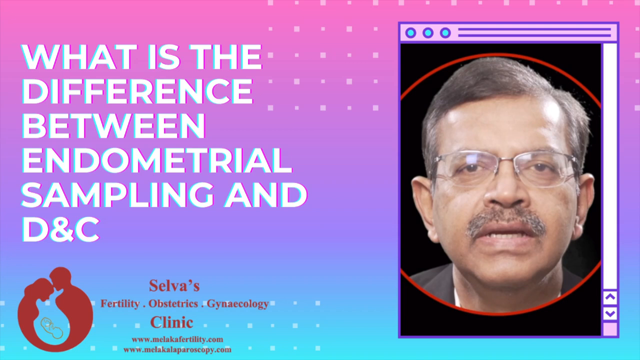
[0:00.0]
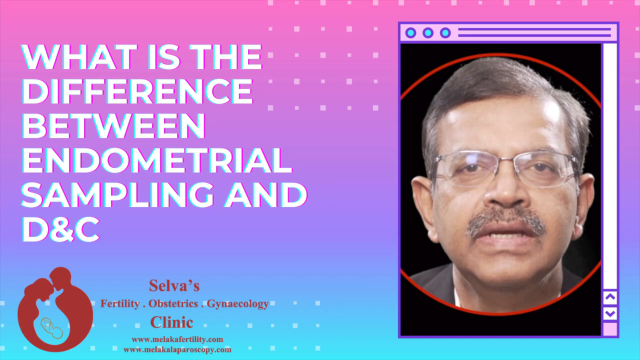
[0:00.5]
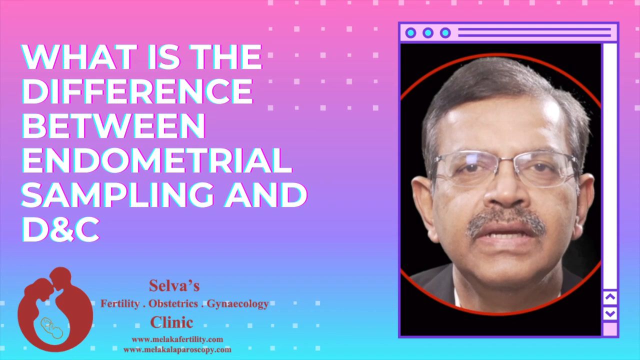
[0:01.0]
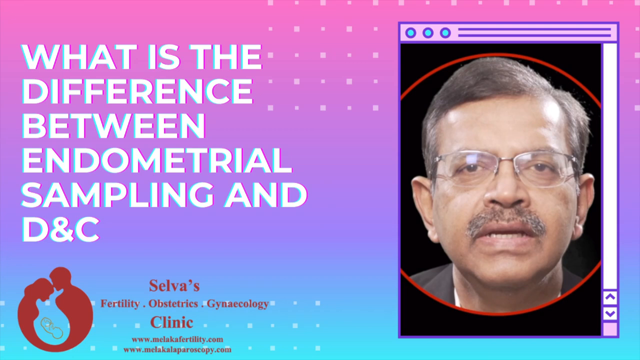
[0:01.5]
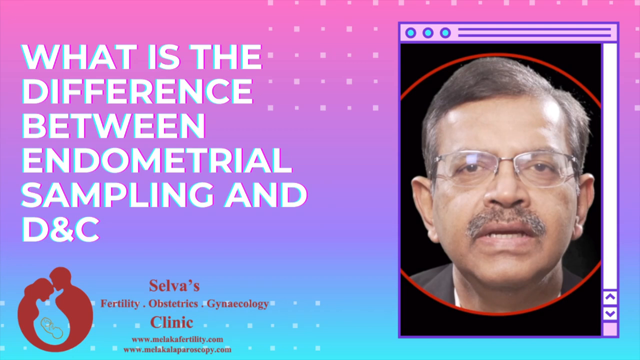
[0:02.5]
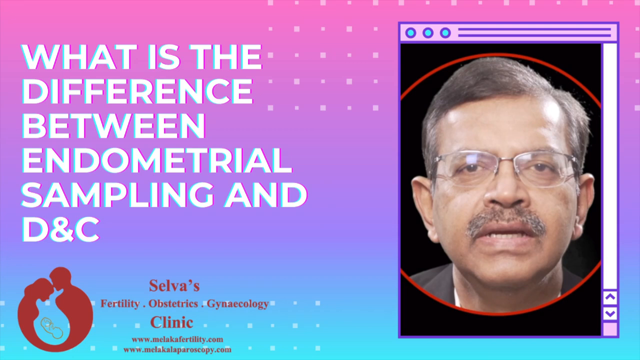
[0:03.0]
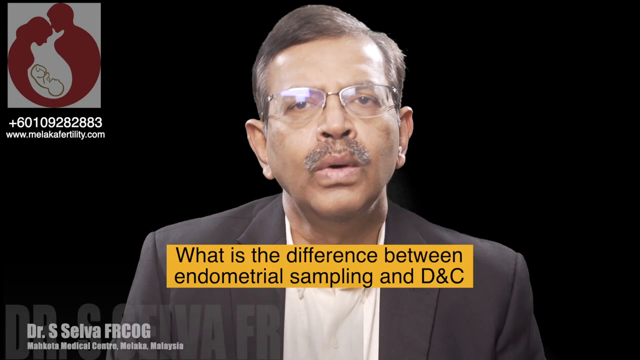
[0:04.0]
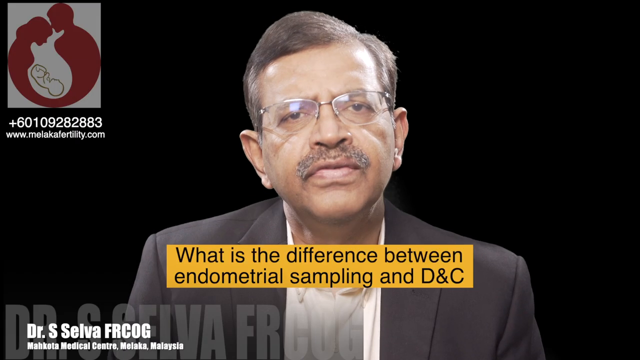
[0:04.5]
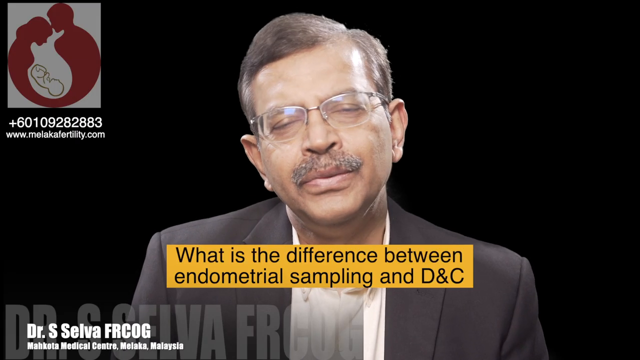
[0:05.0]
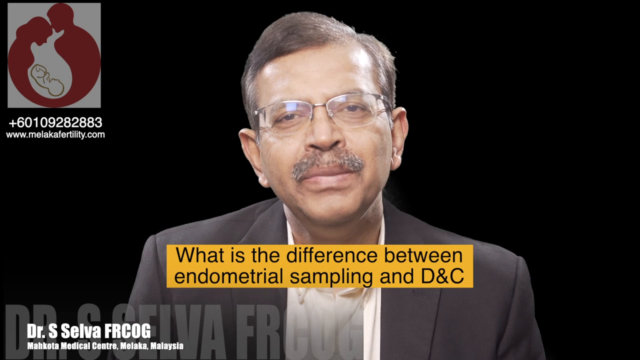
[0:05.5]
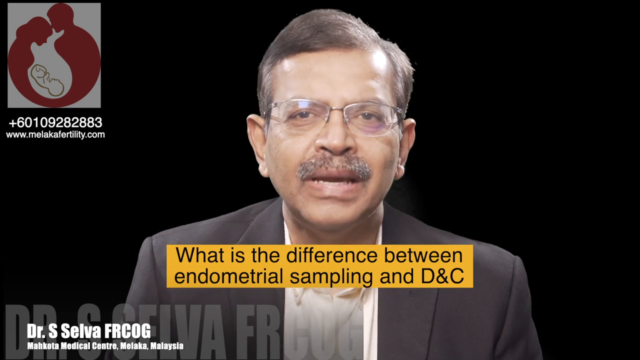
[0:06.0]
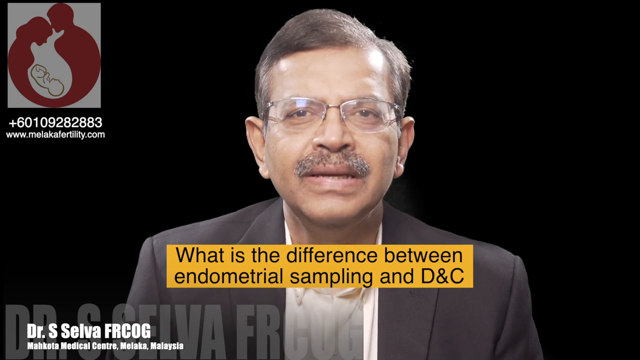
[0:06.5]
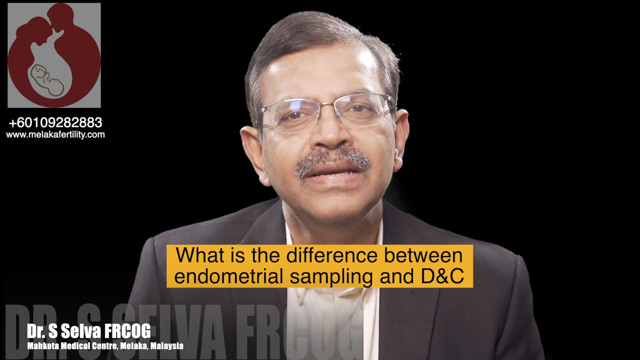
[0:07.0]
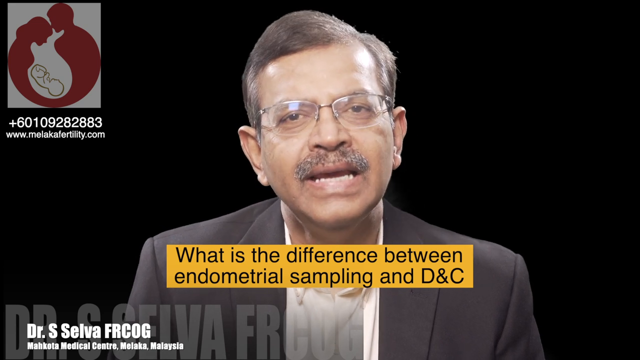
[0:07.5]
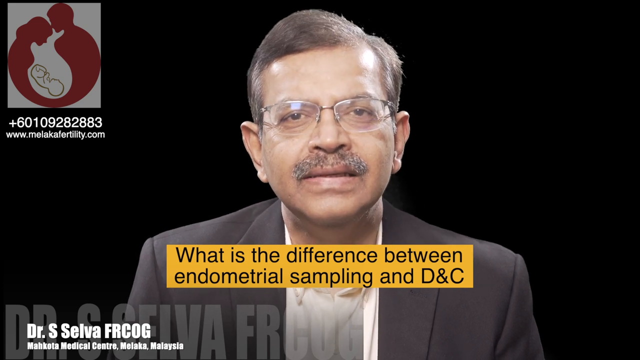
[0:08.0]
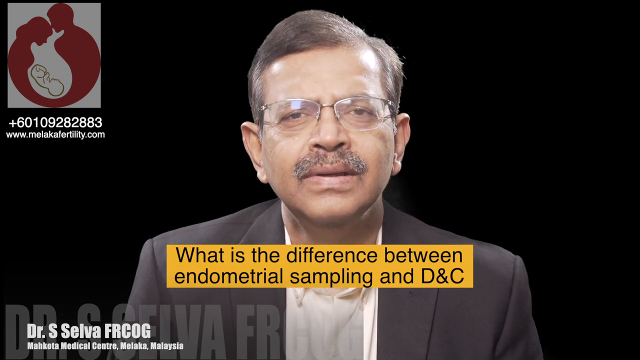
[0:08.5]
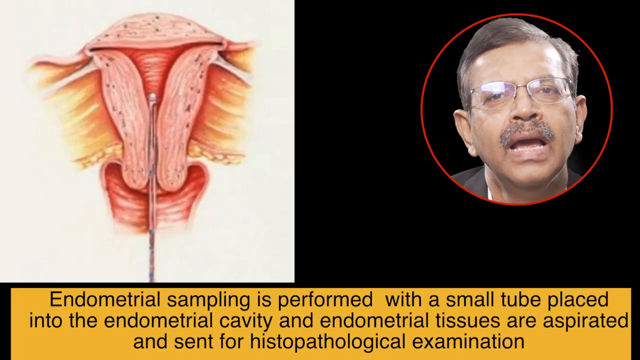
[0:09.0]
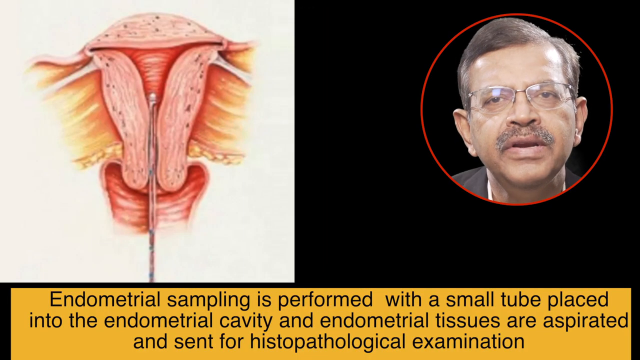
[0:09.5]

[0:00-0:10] A very bright screen has a background gradient going from pink to purple to blue from top to bottom. On the left, big white capital letters read "what is the difference between endometrial sampling and D&C". On the right is a window-style component containing a man's face; he has short hair, wears glasses and has a mustache, and a red line outlines the circle around him. At the bottom left it says "Selva's Fertility Obstetrics Gynecology Clinic", next to the clinic's logo, which looks like two parents holding a baby in between them. The video then begins with the same man talking to the camera against a black background. He says "what is the difference between endometrial sampling and D&C", shown as a subtitle below in black writing on a yellow background.